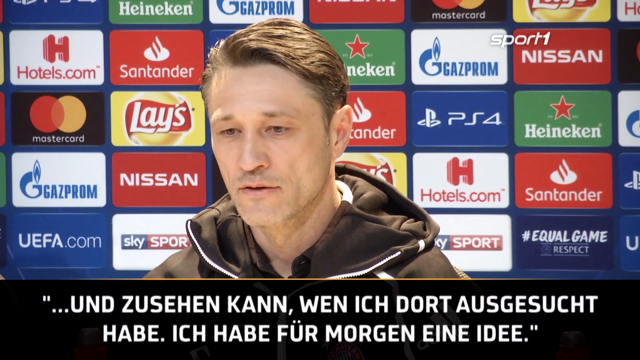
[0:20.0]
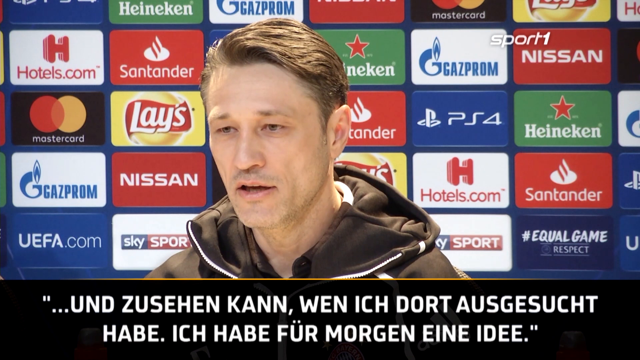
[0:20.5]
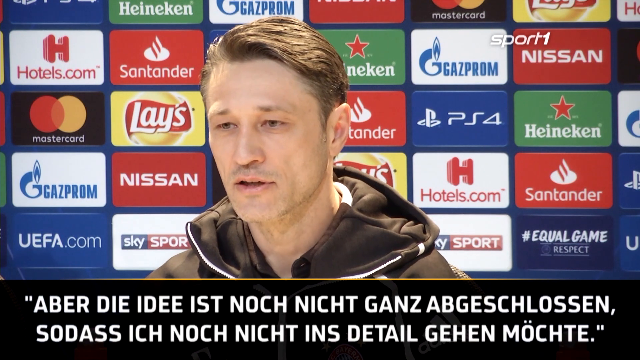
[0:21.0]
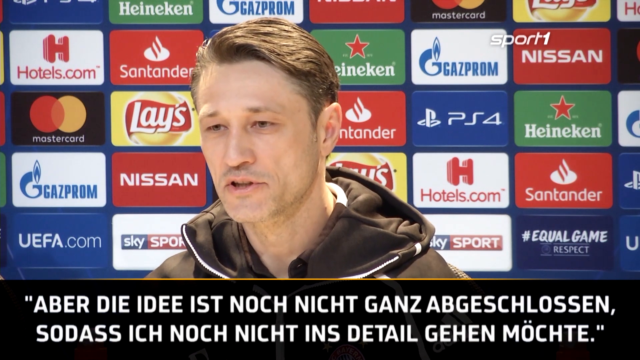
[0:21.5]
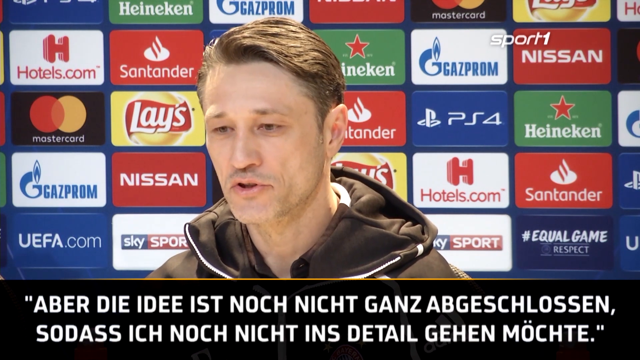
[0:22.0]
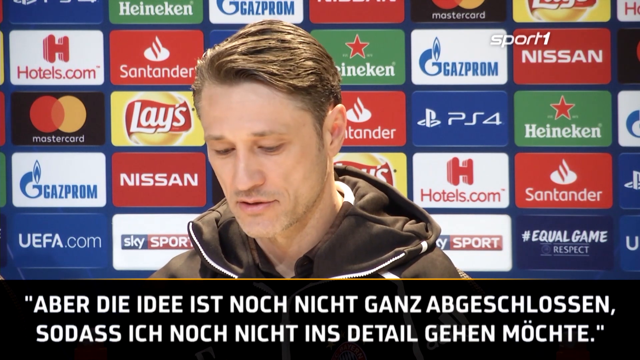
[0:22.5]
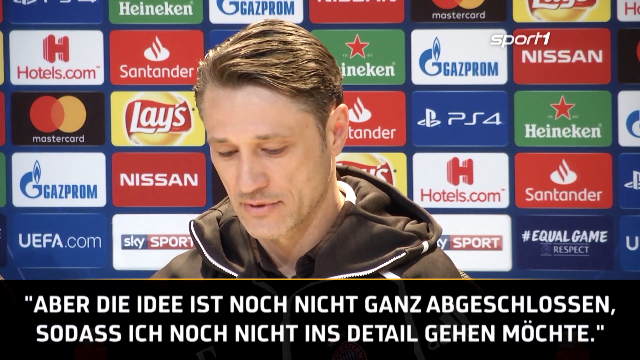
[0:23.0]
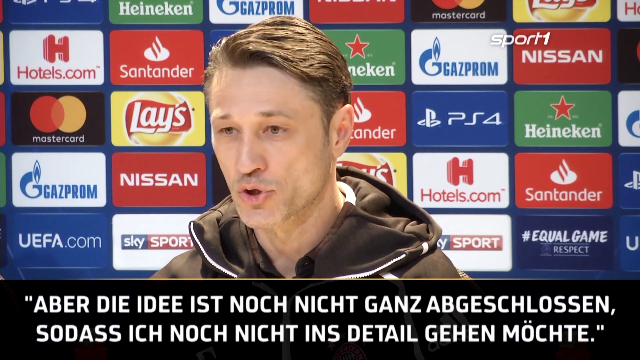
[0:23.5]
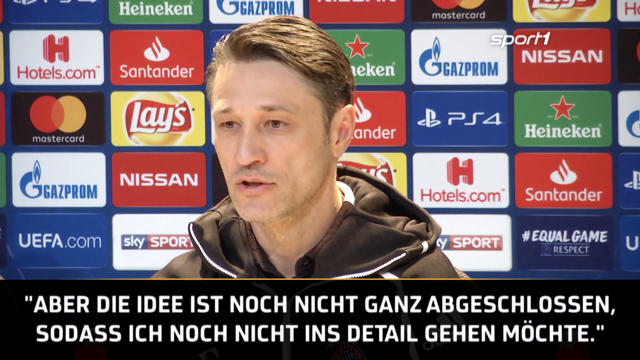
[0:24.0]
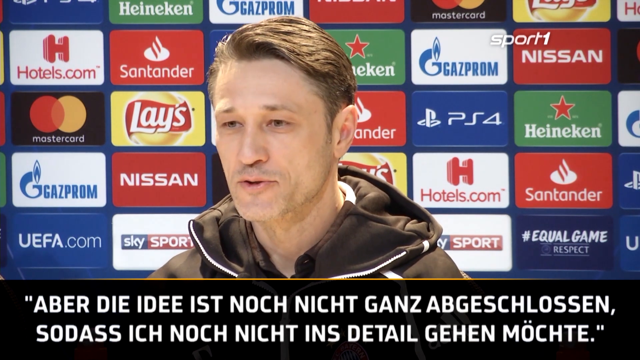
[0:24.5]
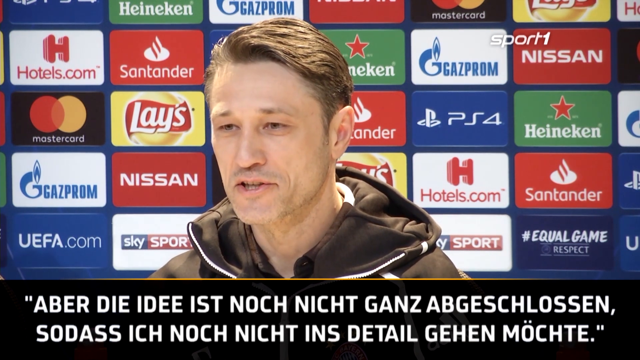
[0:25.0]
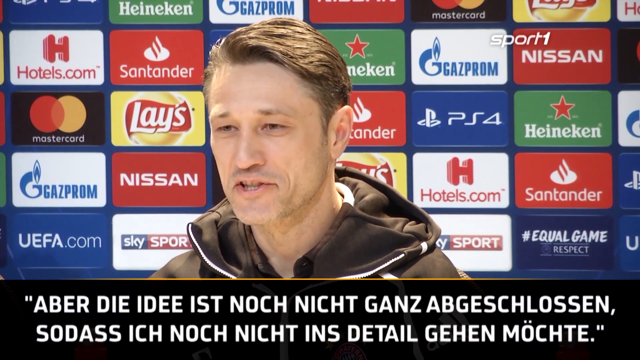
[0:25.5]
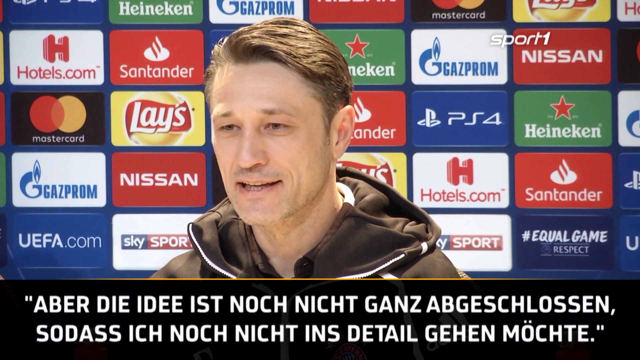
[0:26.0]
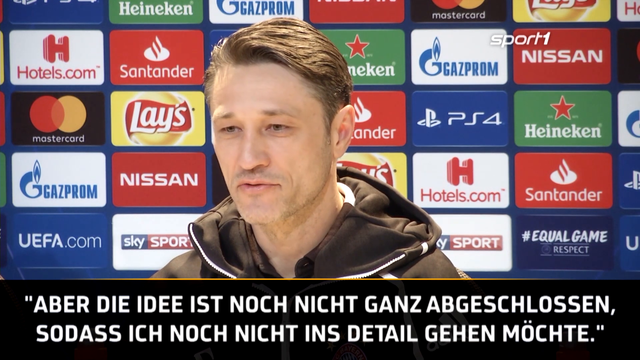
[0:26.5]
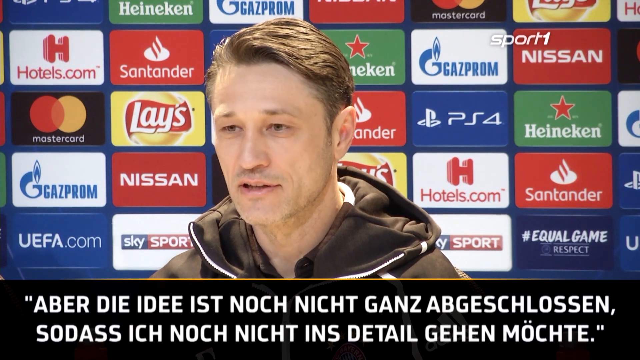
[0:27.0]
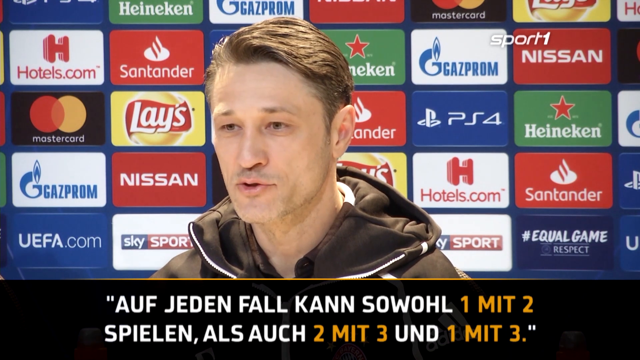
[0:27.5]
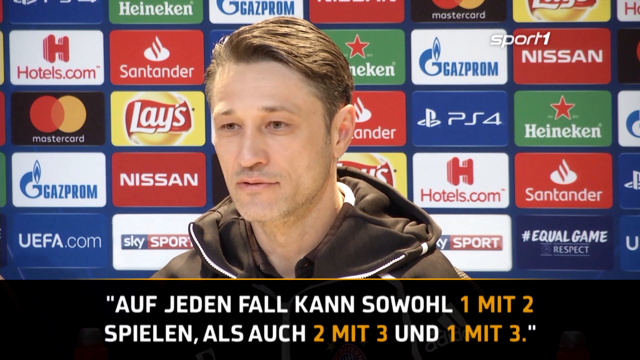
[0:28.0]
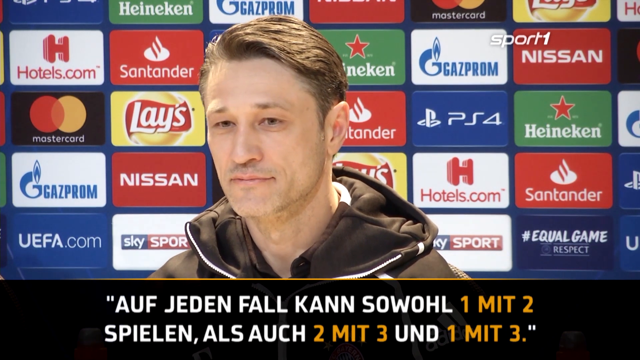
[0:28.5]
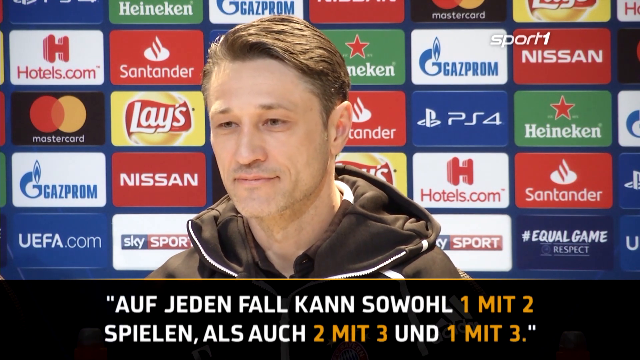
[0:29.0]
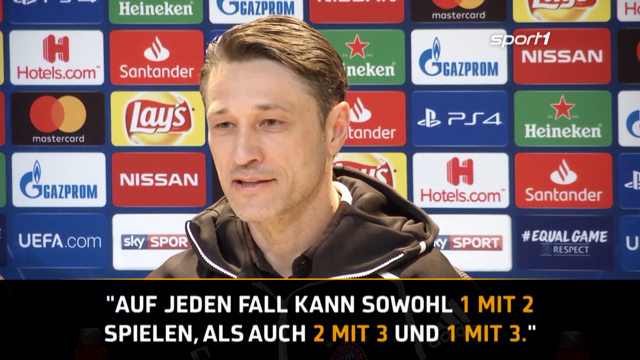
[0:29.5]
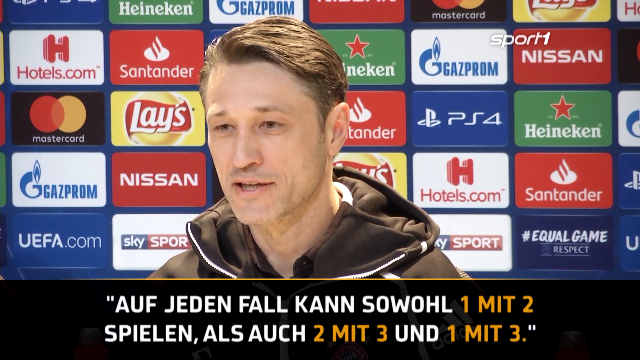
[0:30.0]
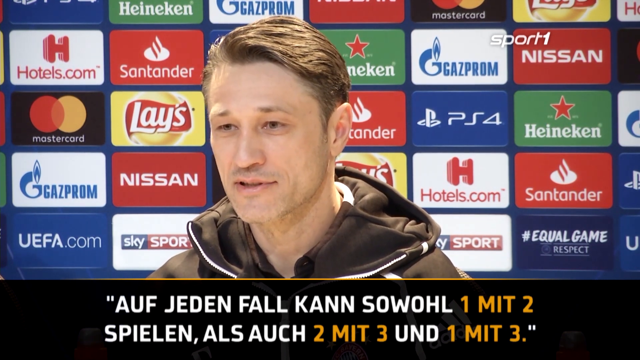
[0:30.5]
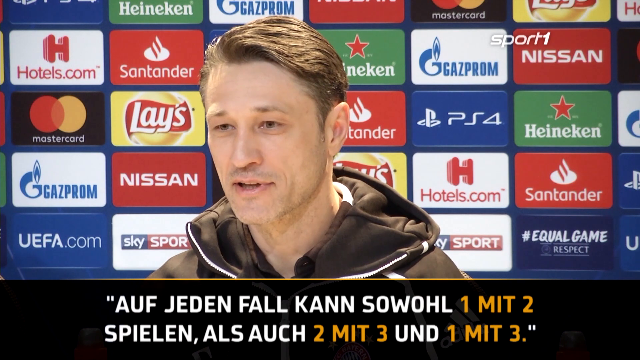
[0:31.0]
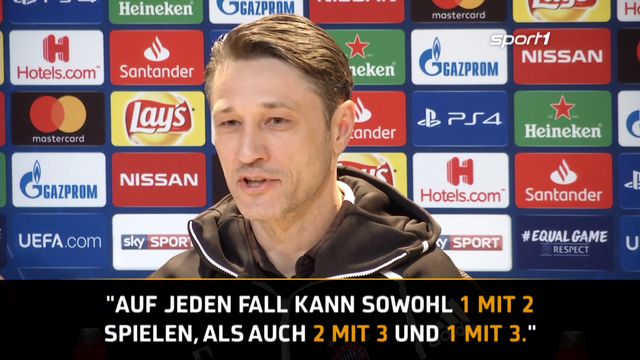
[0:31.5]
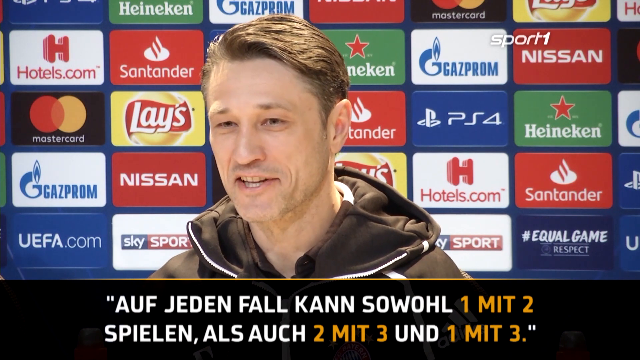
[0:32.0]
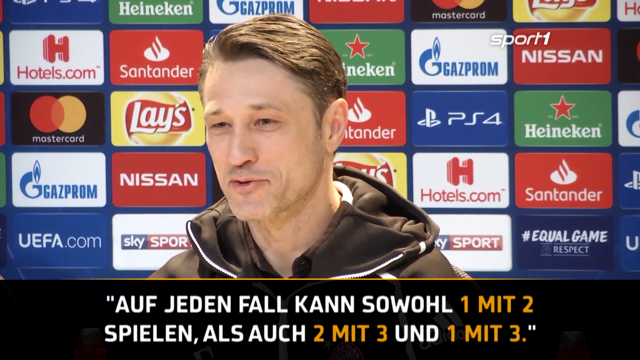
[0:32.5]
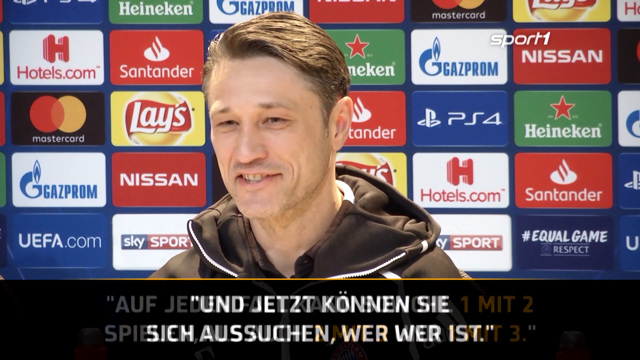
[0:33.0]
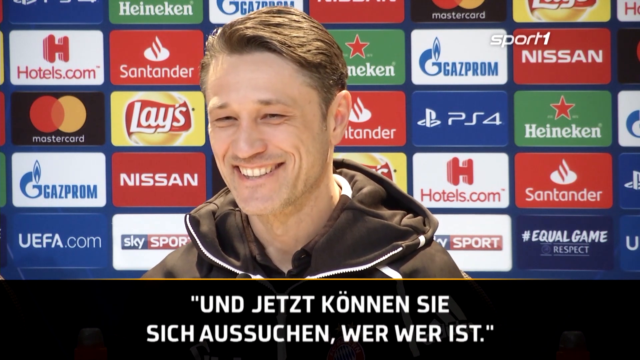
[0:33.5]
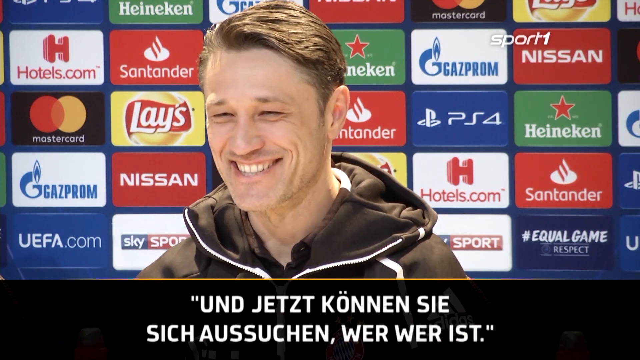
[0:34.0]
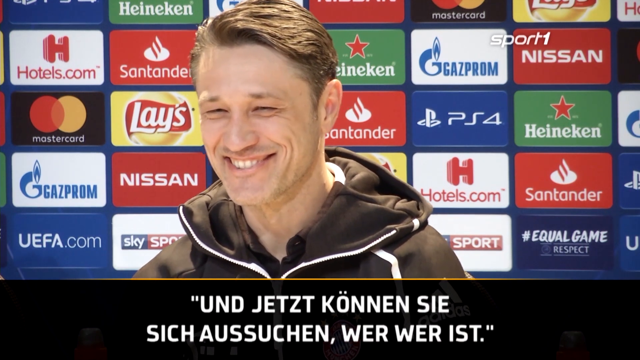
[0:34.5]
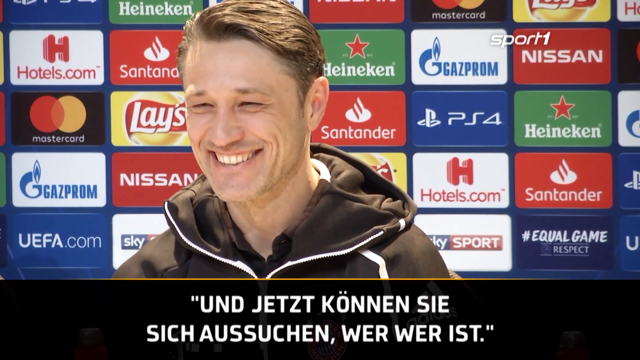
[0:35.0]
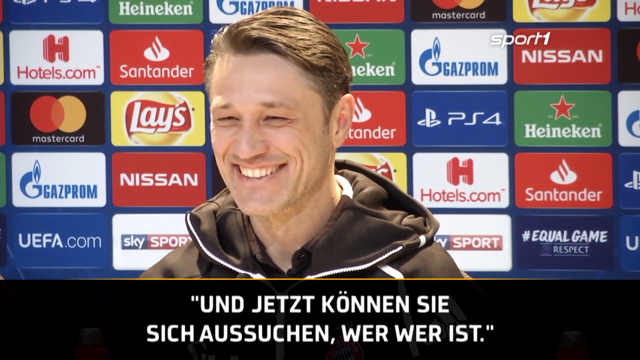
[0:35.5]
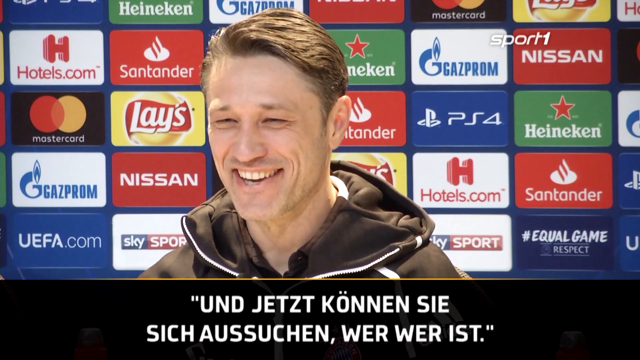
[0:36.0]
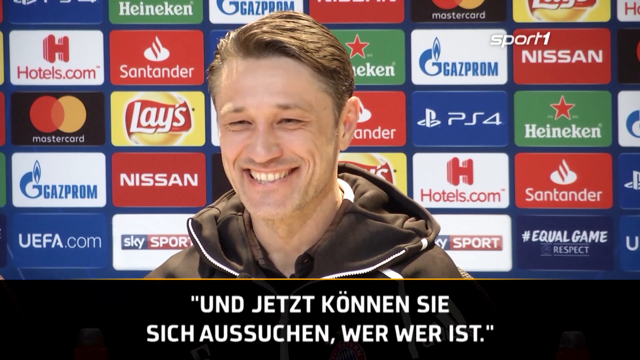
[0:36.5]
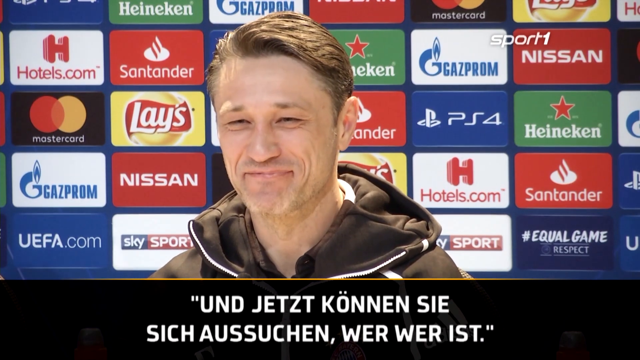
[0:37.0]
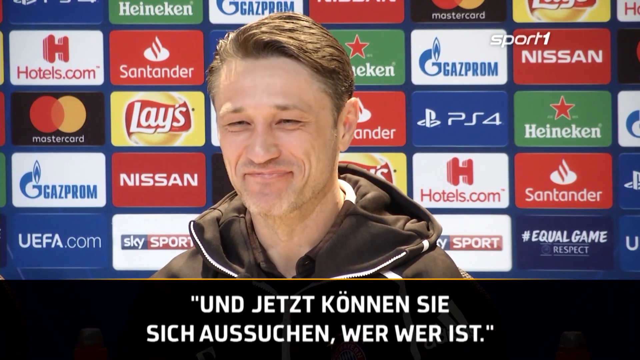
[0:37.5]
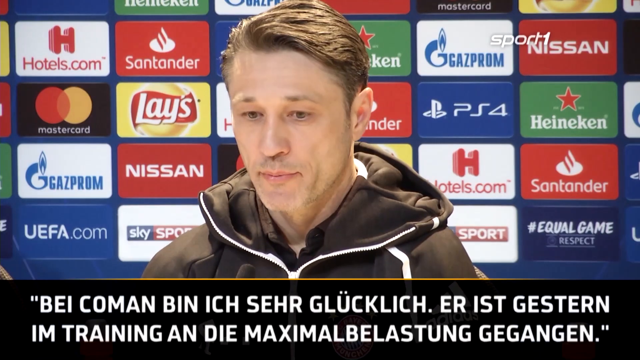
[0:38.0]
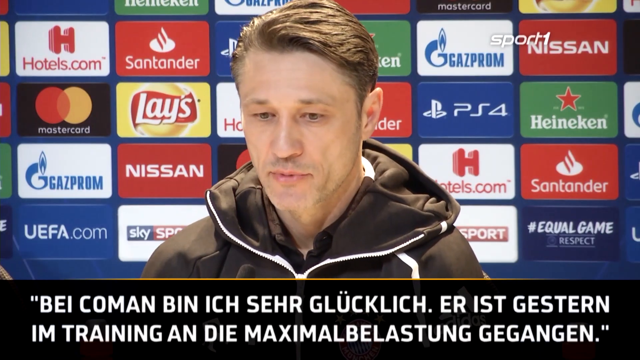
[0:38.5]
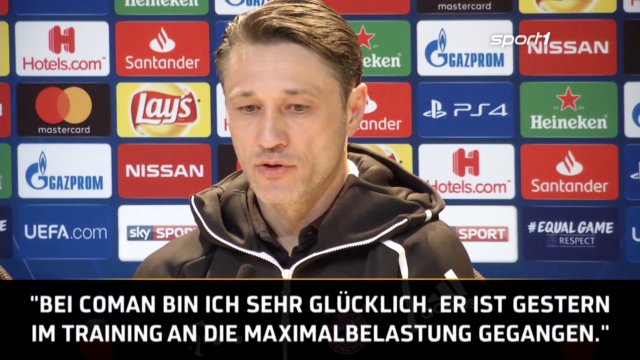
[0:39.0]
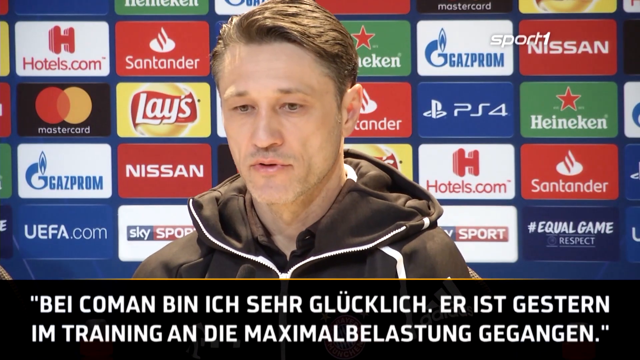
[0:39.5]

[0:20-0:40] The man wears a black tracksuit with white stripes. He looks Caucasian, with a large nose, thin lips and light blonde hair parted to the left, and he is skinny. Behind him is a background with several advertisements, including Nissan, Heineken, PS4, Hotels.com, Santander, Sky Sports, MasterCard and Lays. He is sitting down, looking slightly to his right and answering an interview; "Sport 1" is at the top right. He laughs, looks down for a bit, and then resumes talking, while German words relating to what he is saying appear at the bottom. His gaze shifts and he moves back and forth in his chair. At the end he smiles, showing very straight teeth, and his eyes become very small.